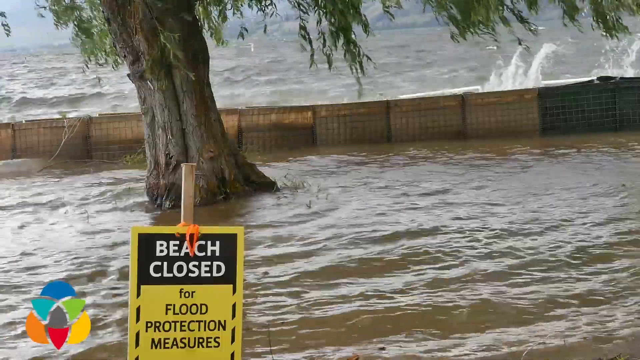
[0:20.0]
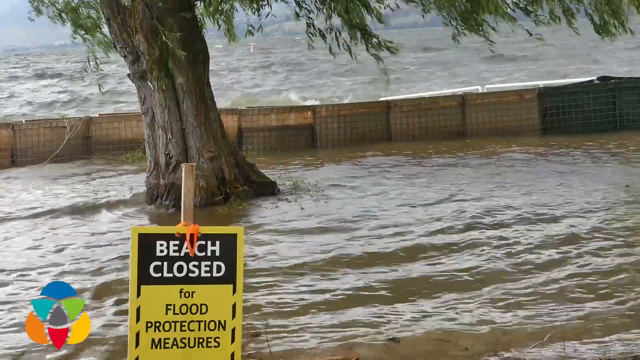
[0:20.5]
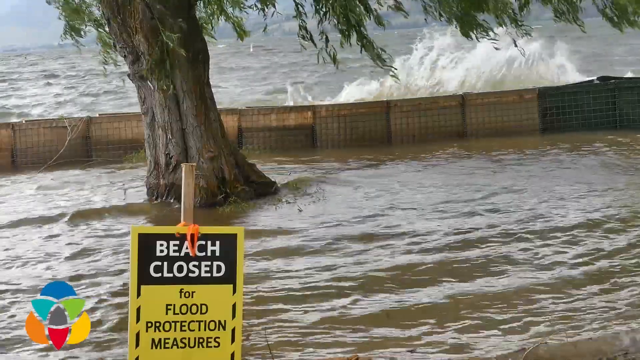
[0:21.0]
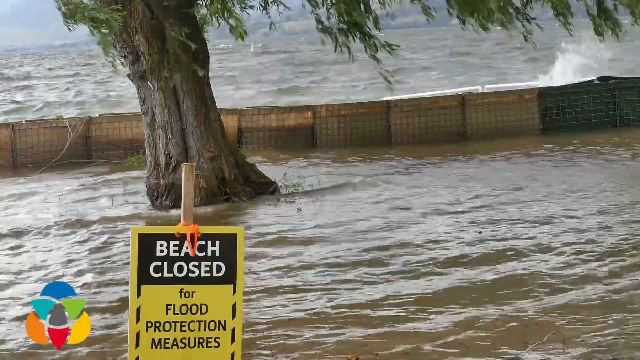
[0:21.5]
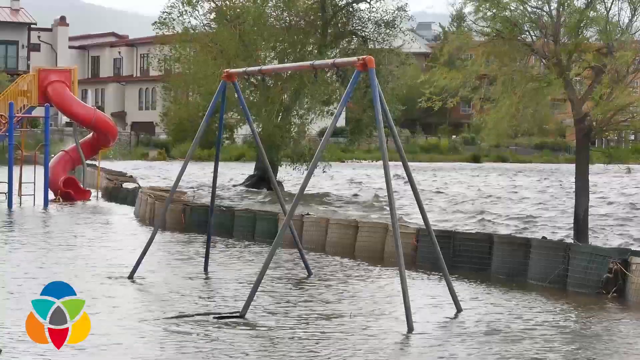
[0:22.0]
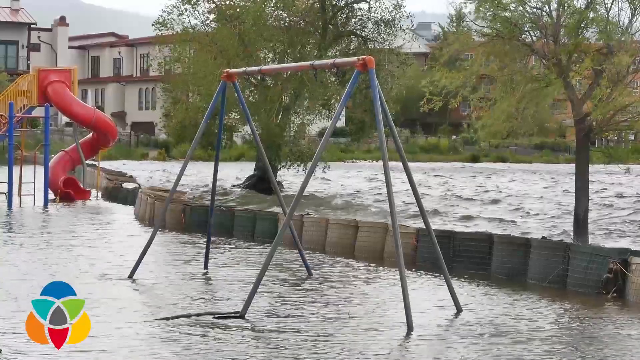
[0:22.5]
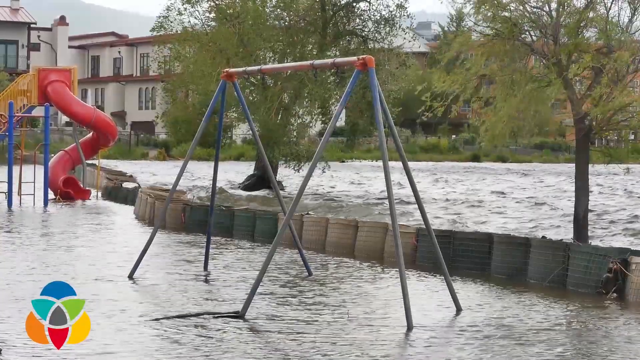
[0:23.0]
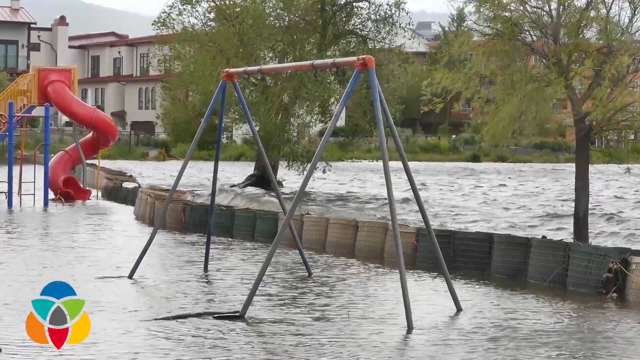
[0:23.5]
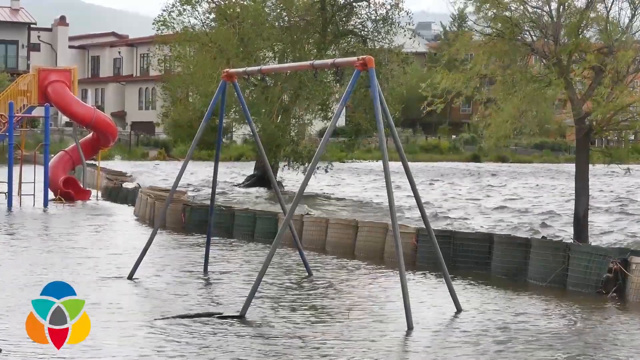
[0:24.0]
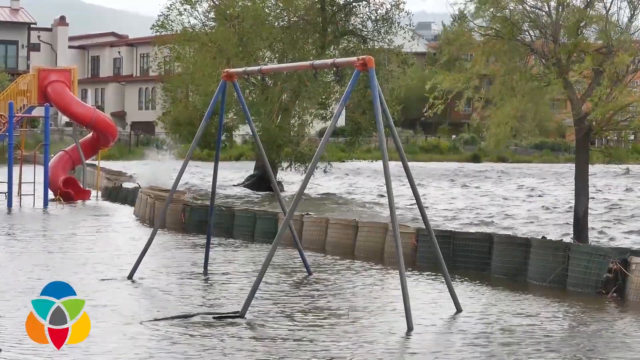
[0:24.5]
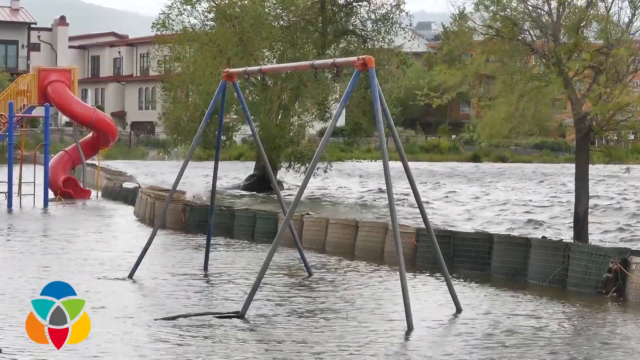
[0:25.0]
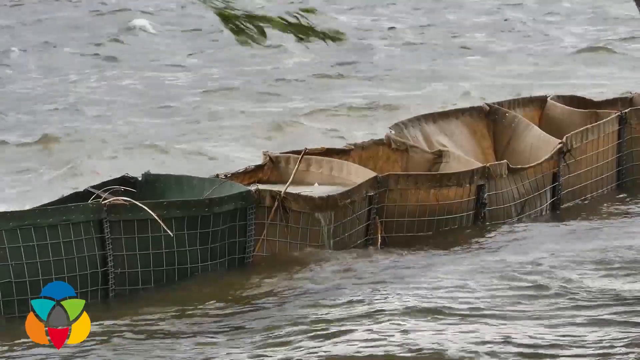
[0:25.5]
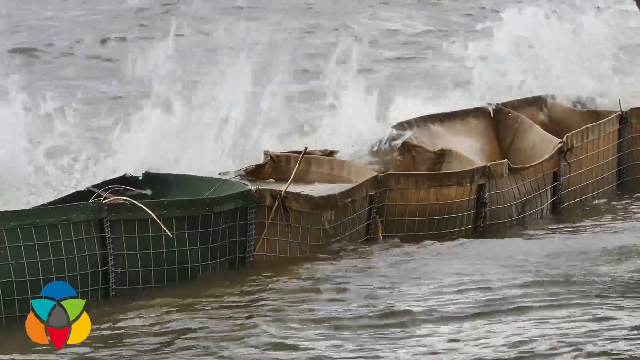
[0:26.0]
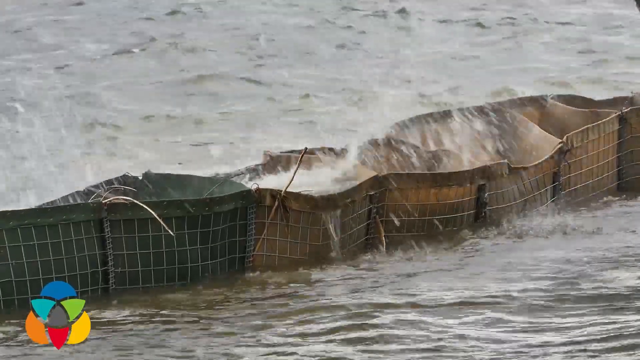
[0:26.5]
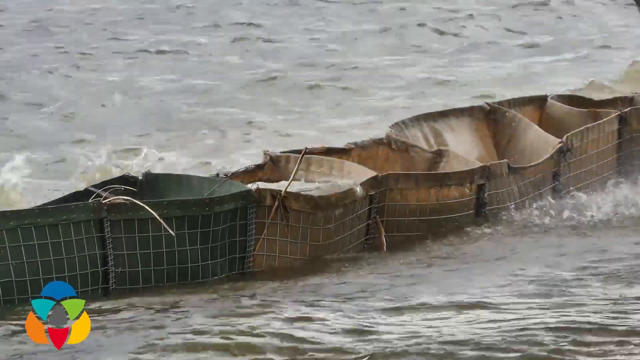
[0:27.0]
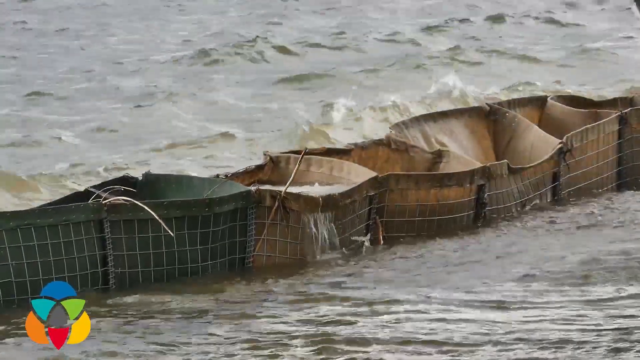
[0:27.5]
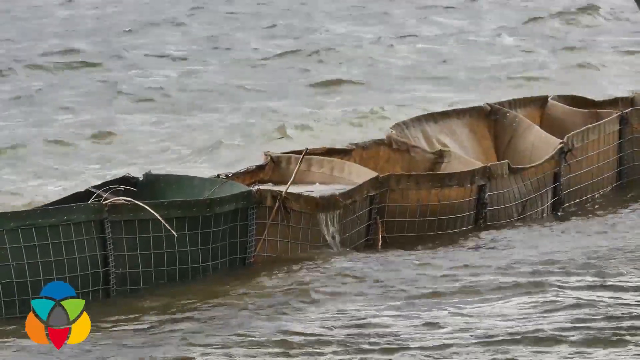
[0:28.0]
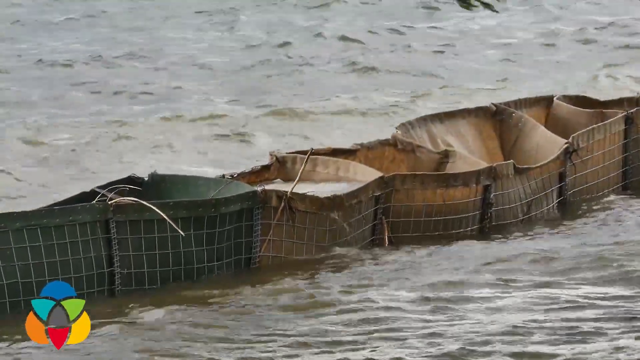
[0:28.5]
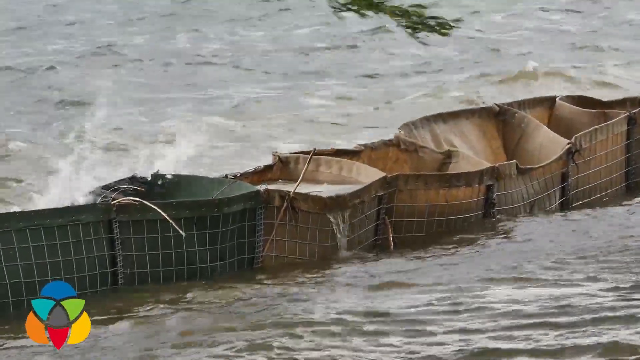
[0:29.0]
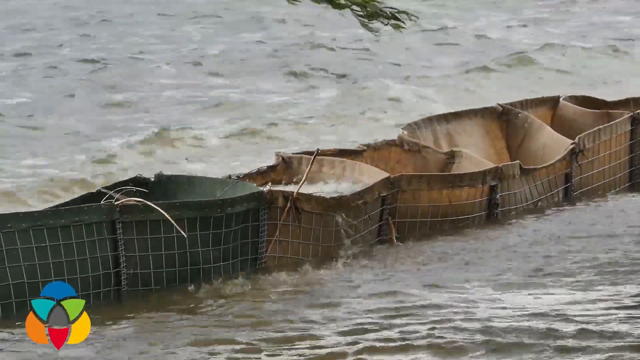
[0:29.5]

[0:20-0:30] A tree and floodwater are shown, with a signpost indicating the beach is closed because of floods. There is a lot of water, with strong waves. The next picture shows a children's playground that is full of water, along with several trees. At the far end are two big houses, and in the far background, though it is not clear, there appear to be two mountains. Two trees are shaken by the wind, though not with great intensity. There are also some water blockers.